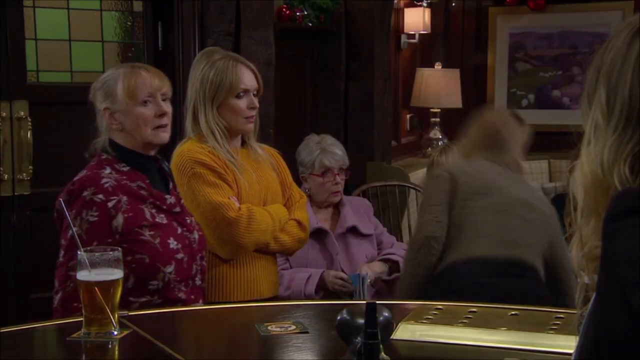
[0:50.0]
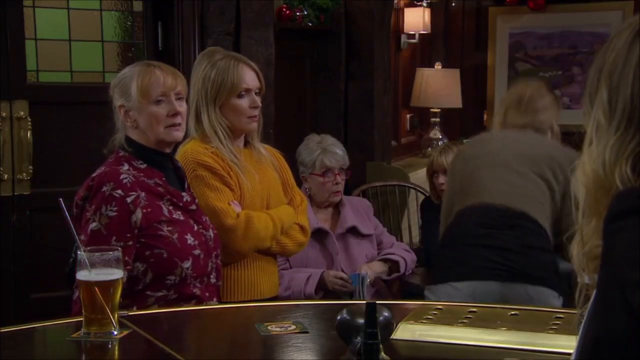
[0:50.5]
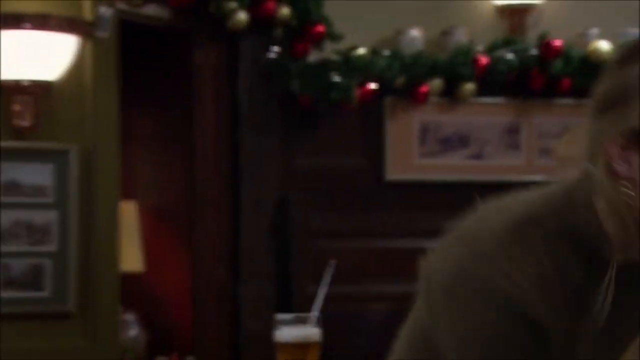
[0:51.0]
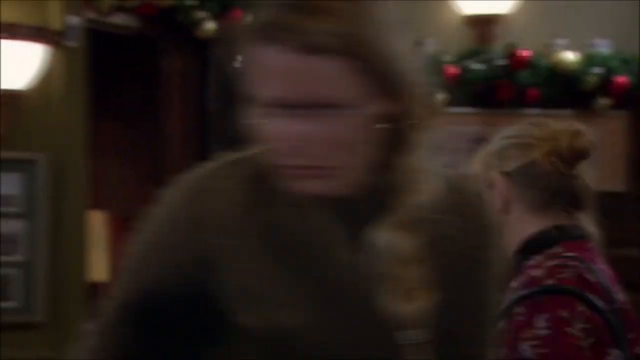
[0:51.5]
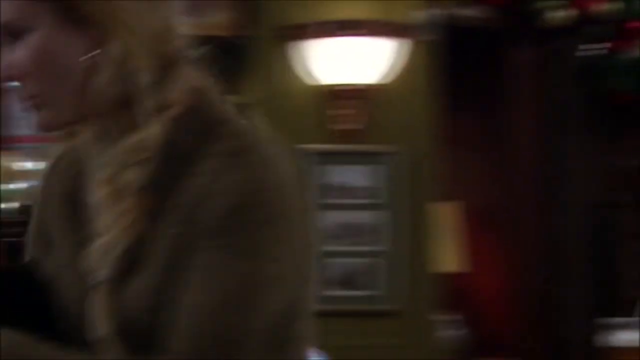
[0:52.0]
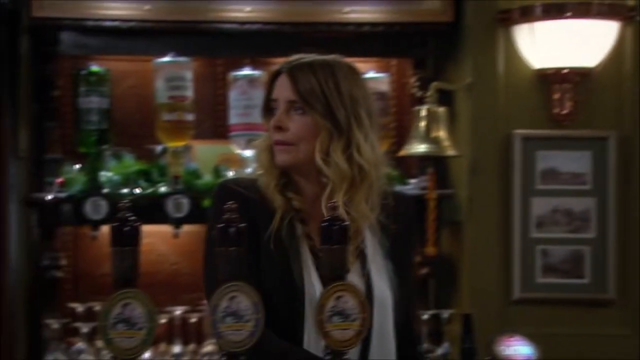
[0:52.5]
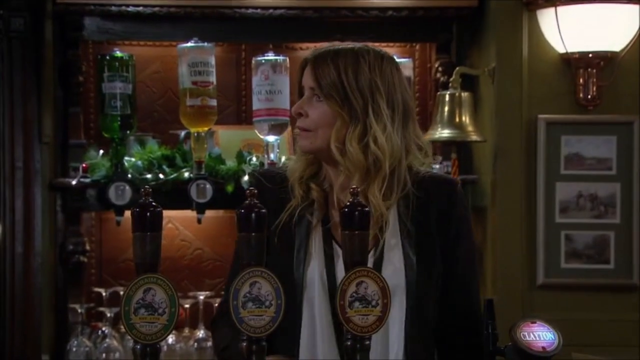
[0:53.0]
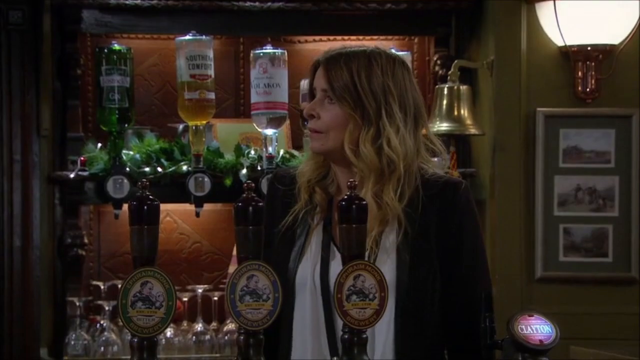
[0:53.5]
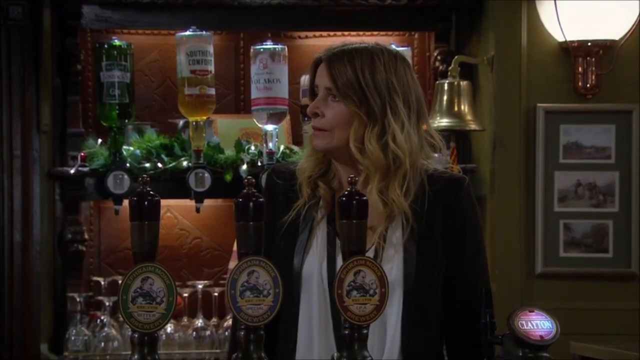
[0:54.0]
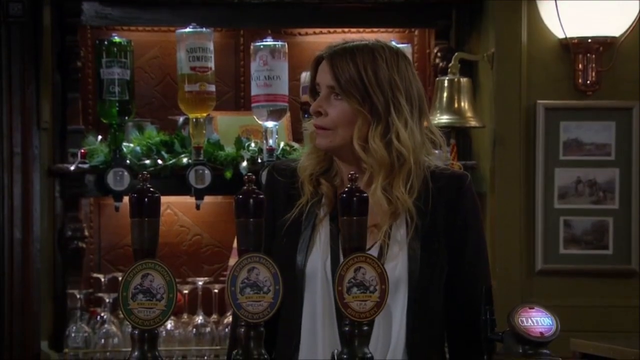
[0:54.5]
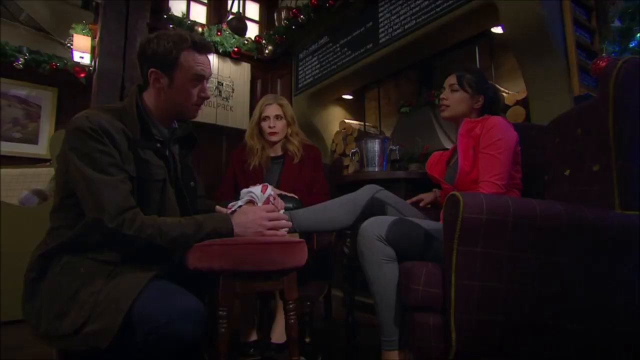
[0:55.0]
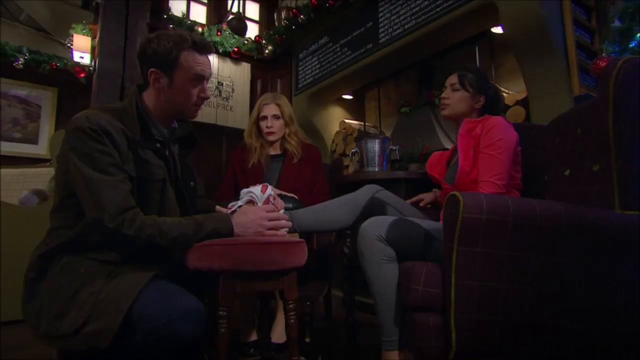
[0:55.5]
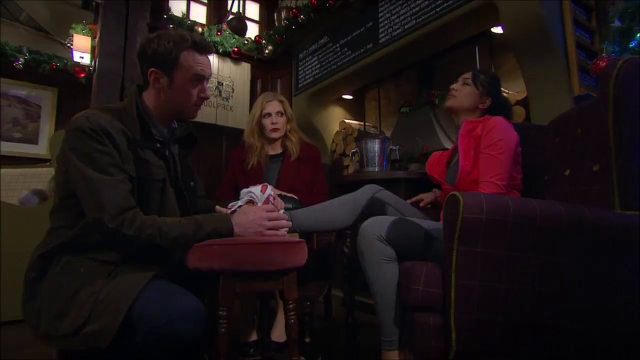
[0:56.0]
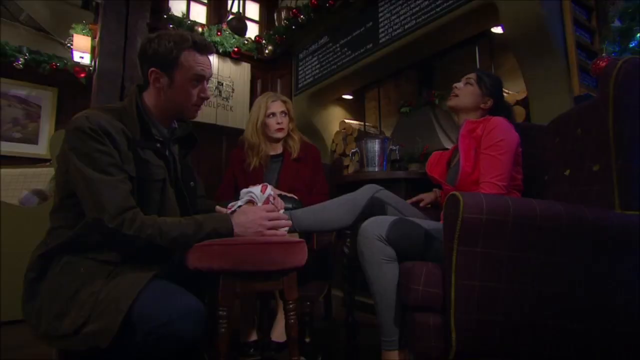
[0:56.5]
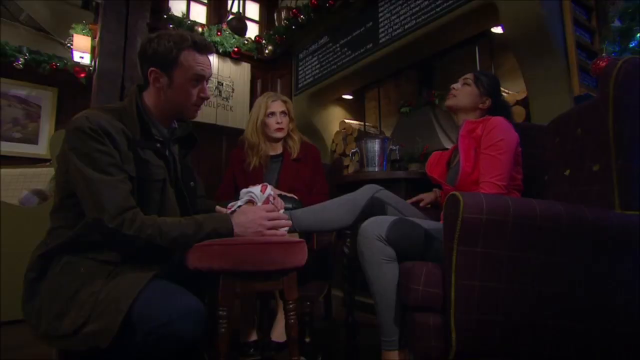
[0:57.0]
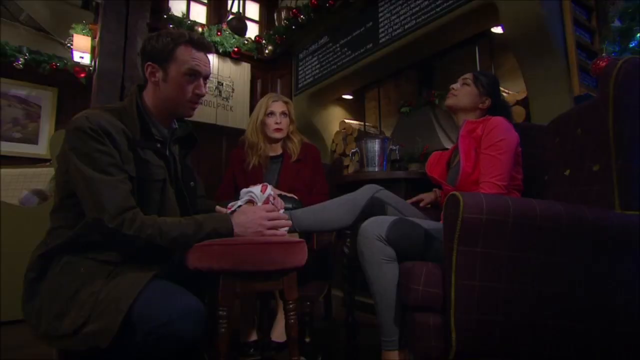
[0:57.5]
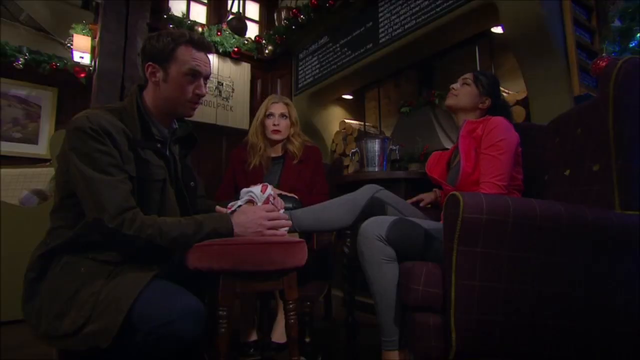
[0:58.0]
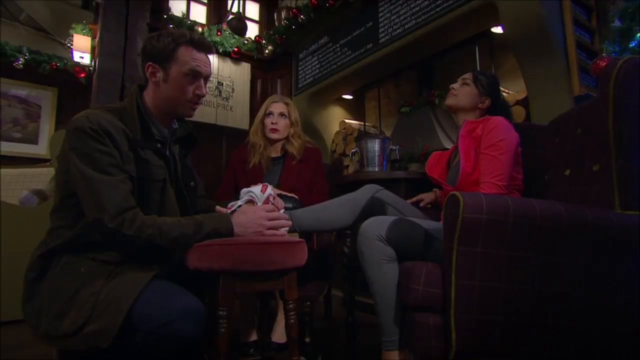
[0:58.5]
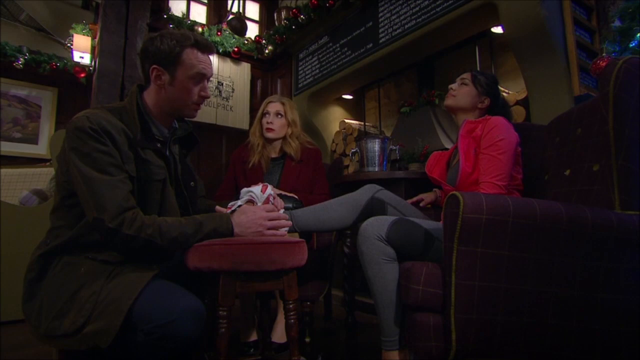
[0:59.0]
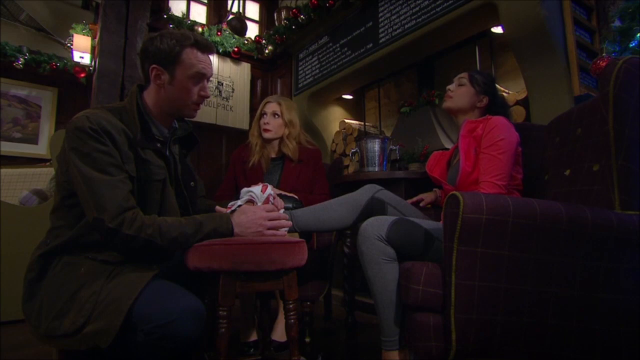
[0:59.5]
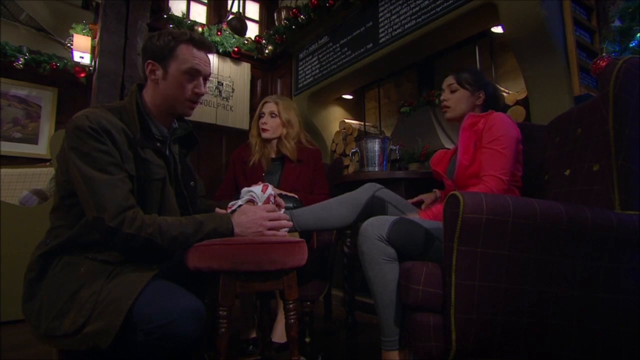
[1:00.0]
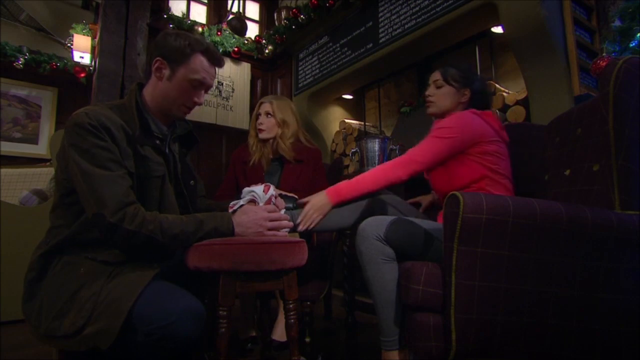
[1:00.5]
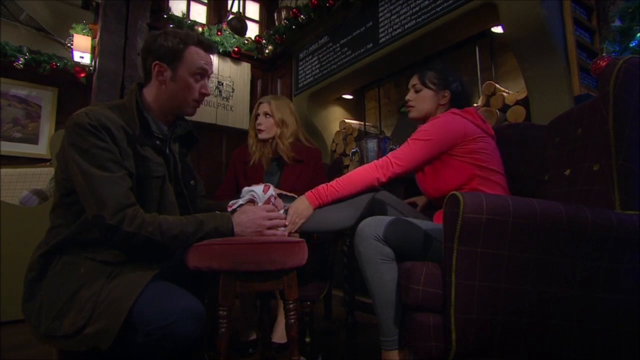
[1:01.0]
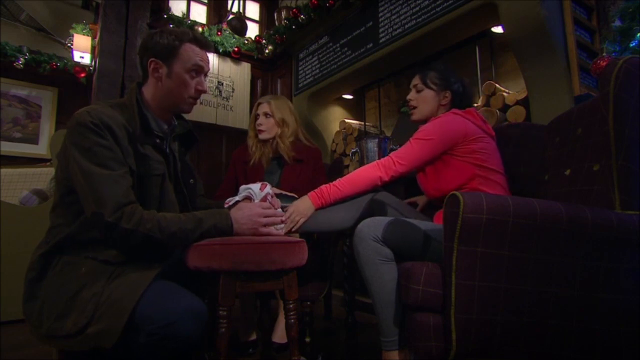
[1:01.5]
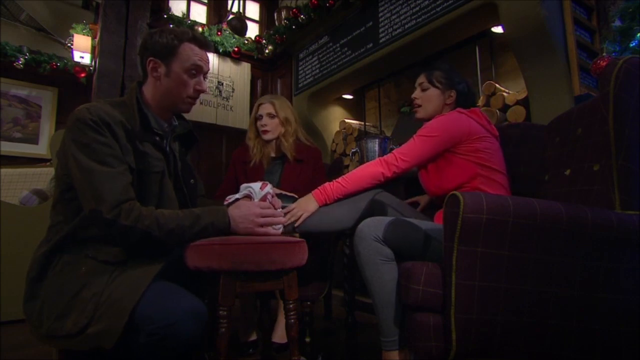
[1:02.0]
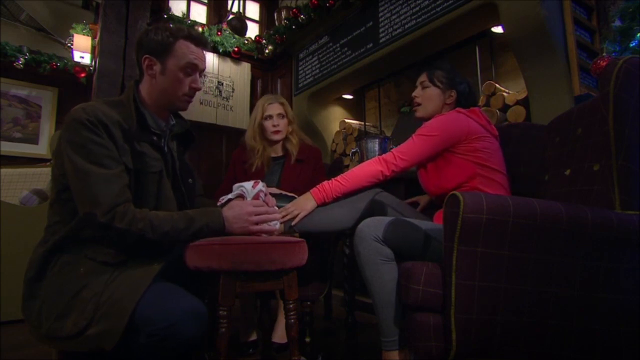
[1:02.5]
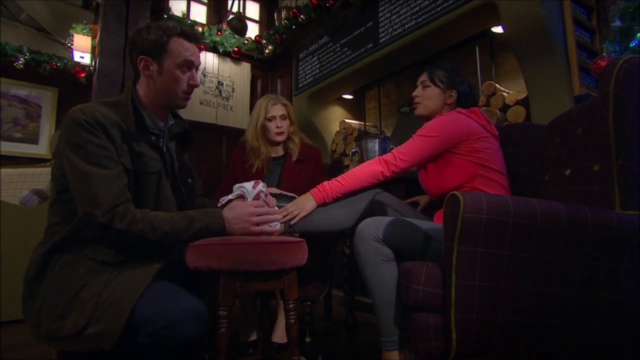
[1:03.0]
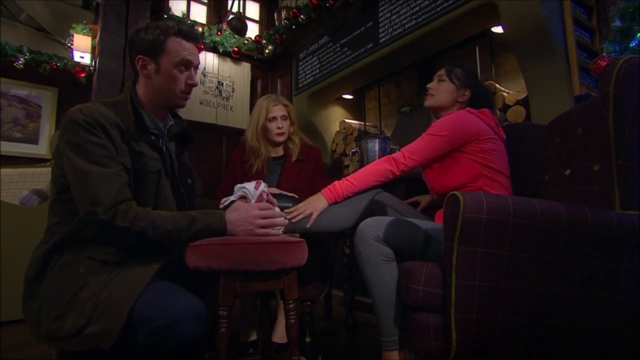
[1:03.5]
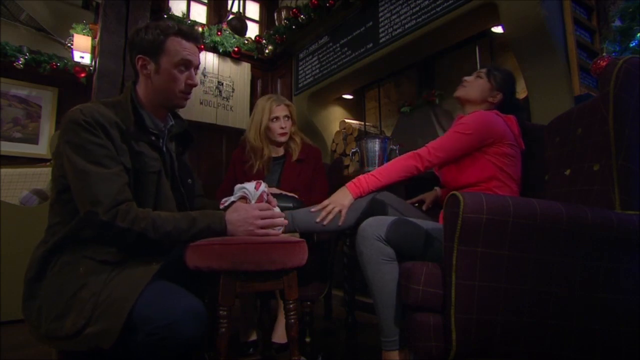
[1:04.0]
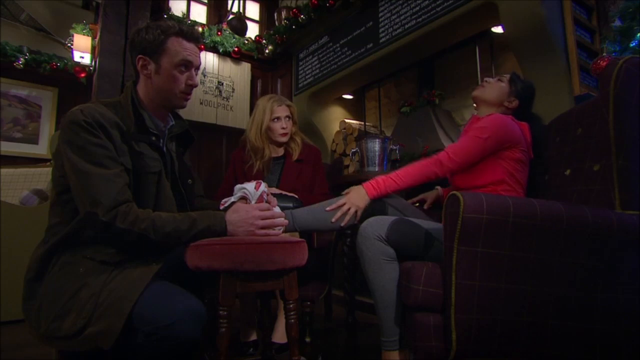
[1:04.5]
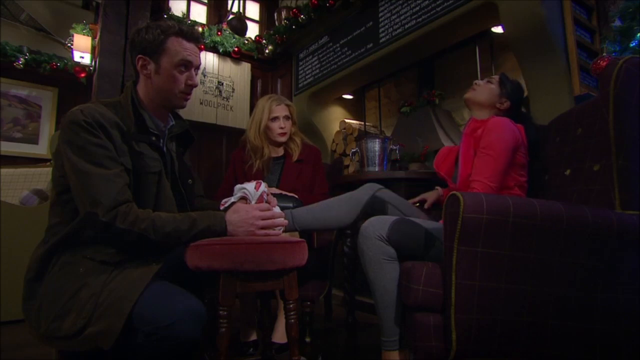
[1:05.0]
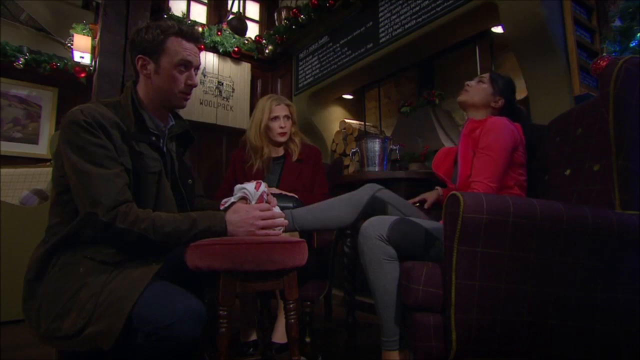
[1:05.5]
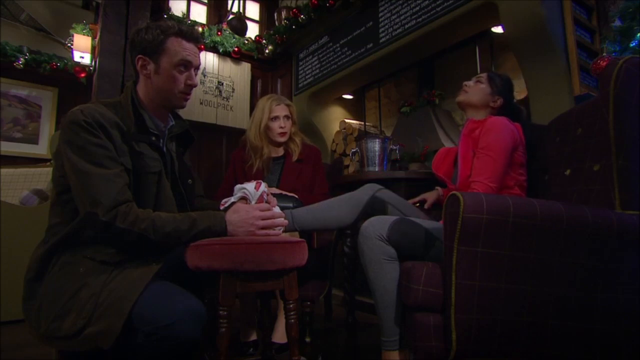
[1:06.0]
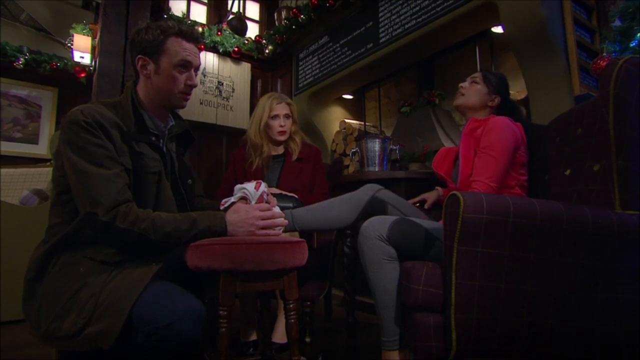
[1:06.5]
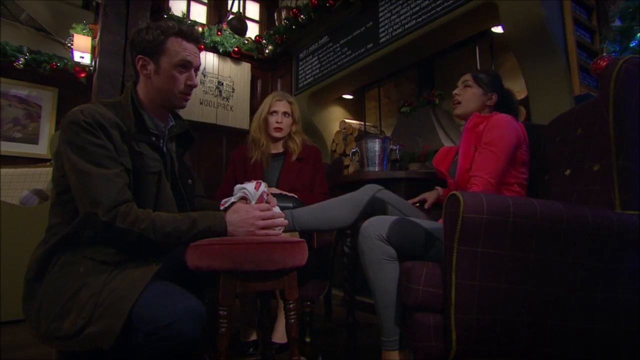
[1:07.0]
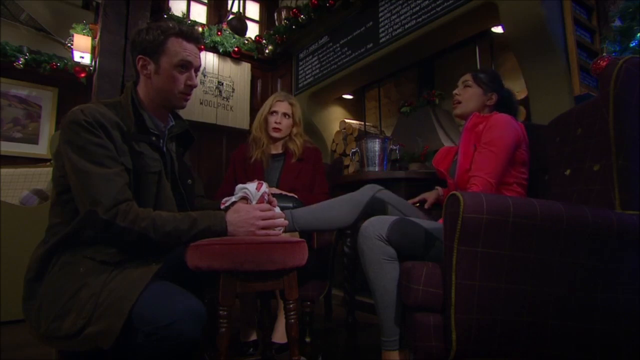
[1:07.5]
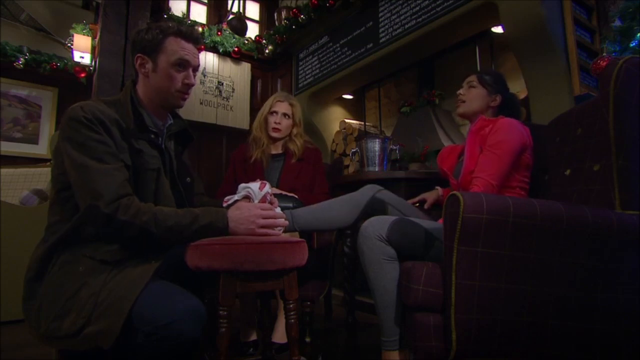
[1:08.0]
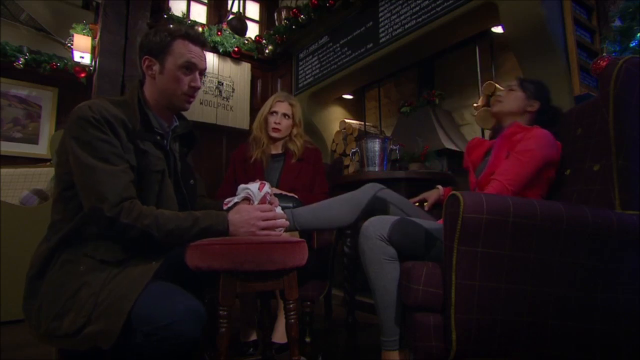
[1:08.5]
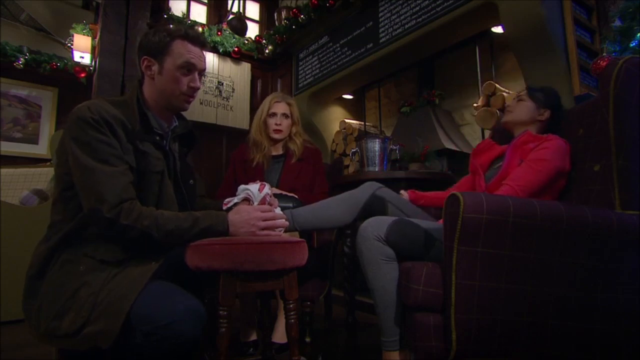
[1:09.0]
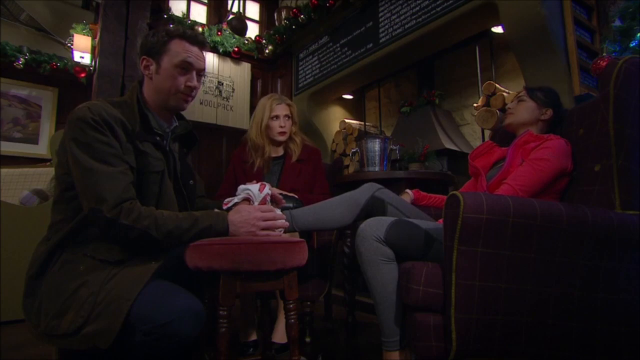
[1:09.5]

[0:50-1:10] Everyone in the bar seems to be upset. Everyone is wearing warm clothes such as sweaters, jackets and scarves, and there are Christmas trees, garland and bulbs everywhere. Many people are leaving the bar, and the bartender gets upset. The scene switches to the injured woman, who is sitting in the same workout outfit and seems to be doing a little better. It looks like the man who brought her in got her ice; her foot is on a footstool and he is holding ice to it while they talk. The unhappy blonde lady, who seems a little older than the young couple, is sitting there too; they look like they are by the fireplace or the firewood. The injured woman keeps talking and tells him to move the ice to where it hurts, while the man kind of answers her and seems to be starting to feel awkward and uncomfortable; he won't look at her. In the background, the blonde lady keeps shaking her head and rolling her eyes.